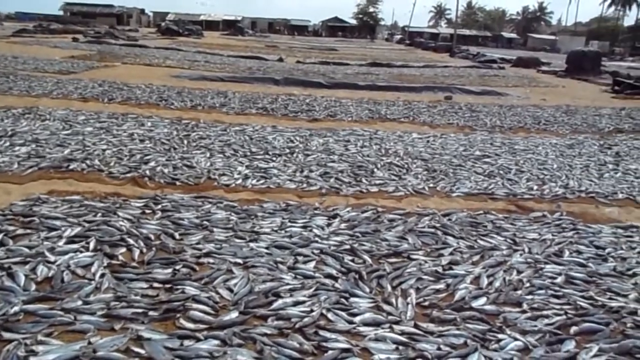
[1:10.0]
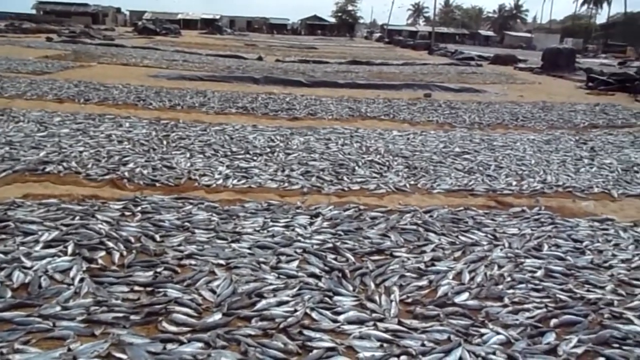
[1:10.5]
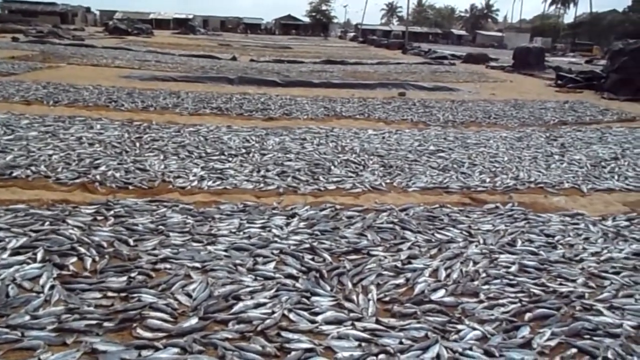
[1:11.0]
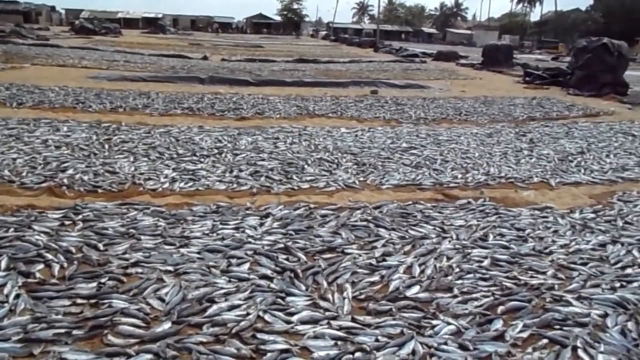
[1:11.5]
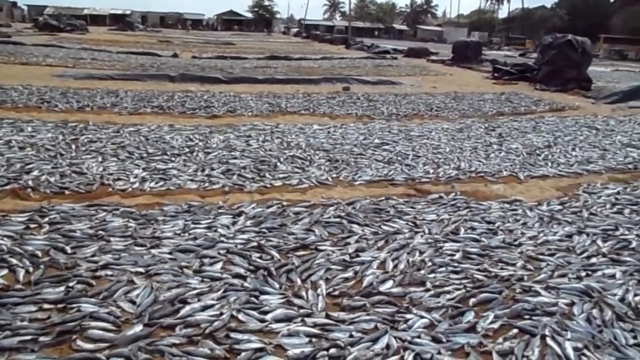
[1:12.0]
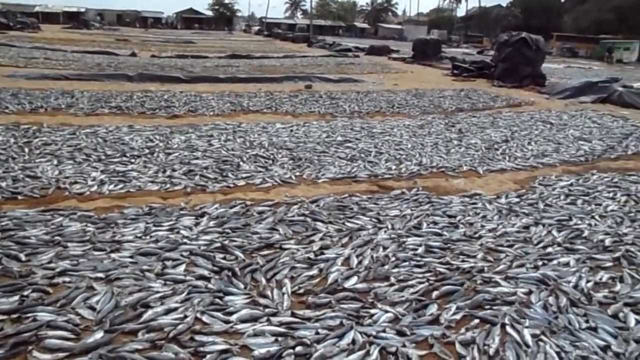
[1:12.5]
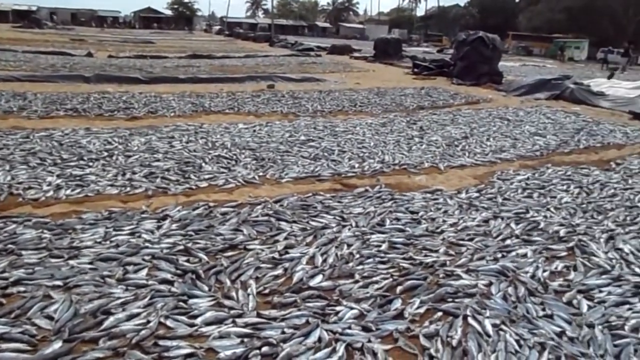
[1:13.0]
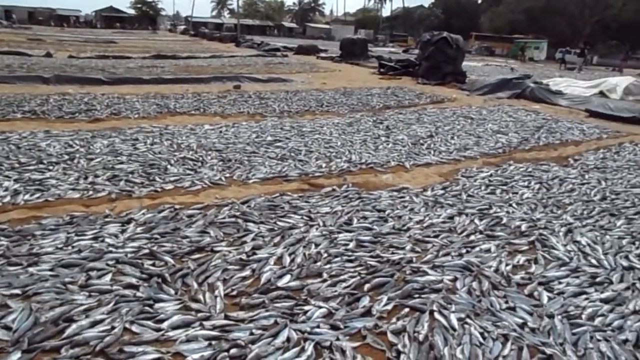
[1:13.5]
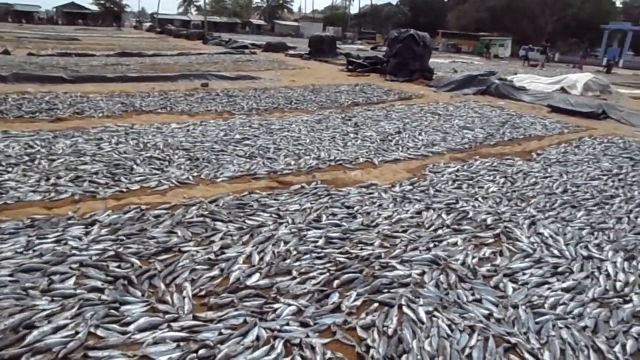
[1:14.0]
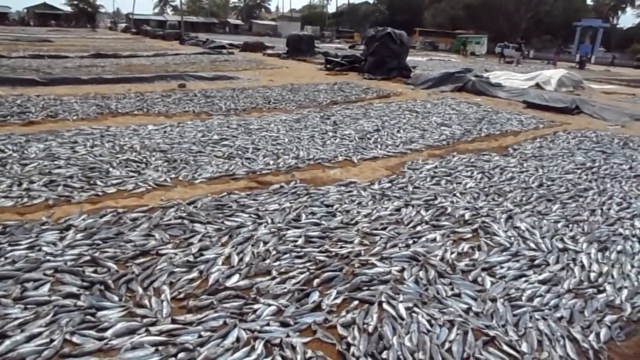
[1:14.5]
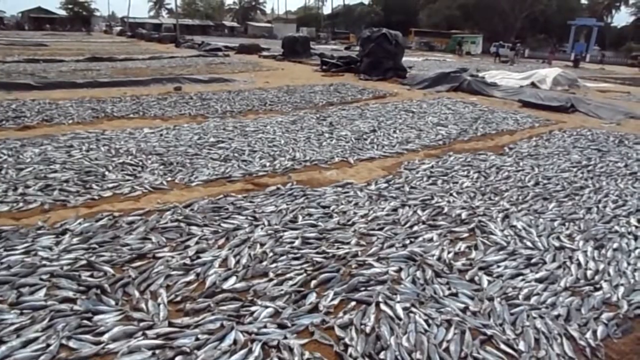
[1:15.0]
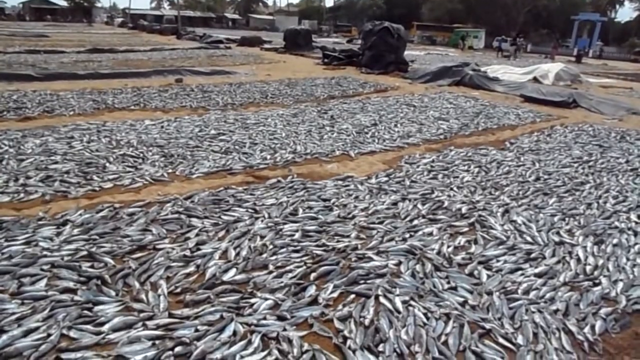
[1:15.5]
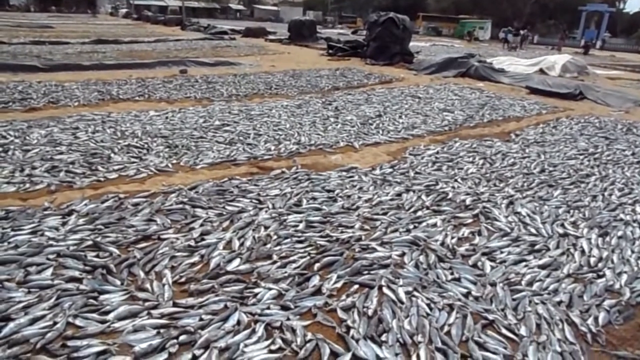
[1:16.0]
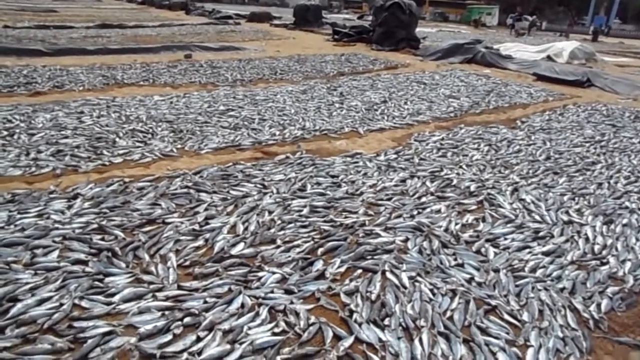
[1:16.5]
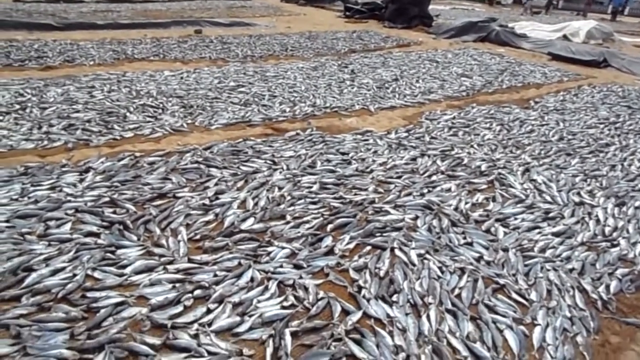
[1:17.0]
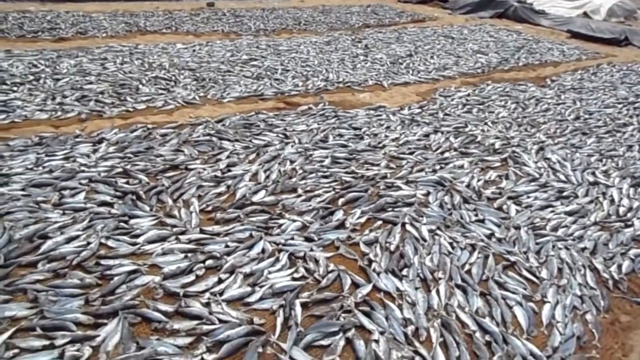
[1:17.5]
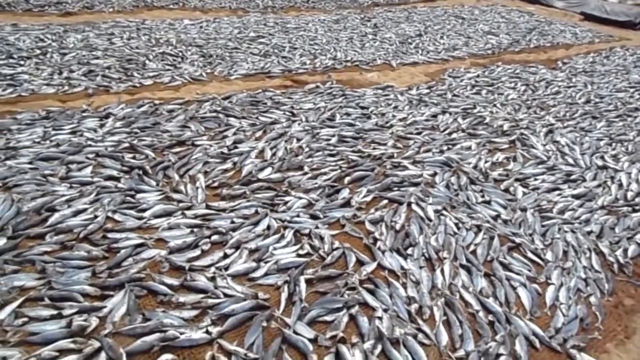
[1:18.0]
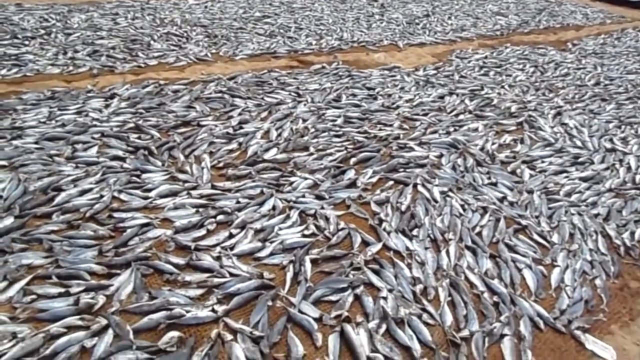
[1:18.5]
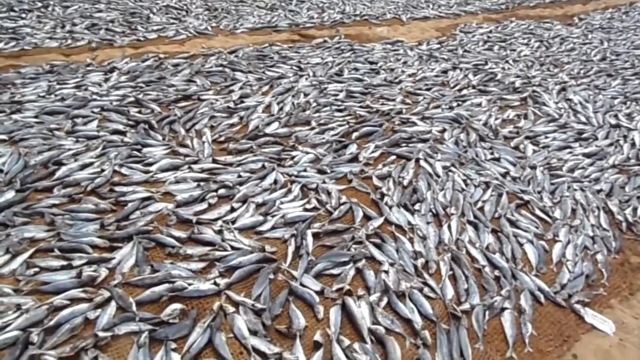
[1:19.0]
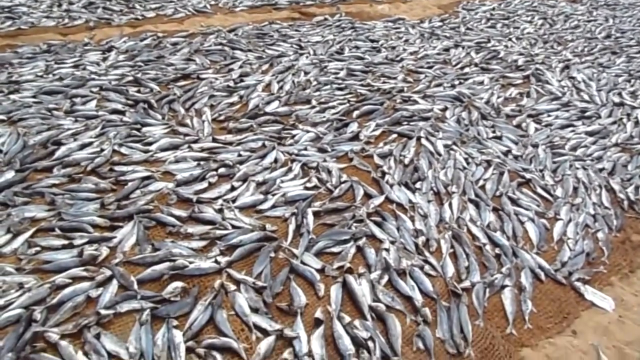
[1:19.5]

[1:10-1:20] The camera looks around at the tarps of fish. A few birds seem to be flying over the area or walking on the sand. Many things are covered in tarps, with unclear large objects underneath, maybe pieces of equipment or wagons. The camera pans down to the tarp in front of the cameraman for a closer shot of the fish, which are all dead. There are easily a thousand on one tarp, maybe more, laid out across it. Palm trees, big tropical trees, stand in the distance.